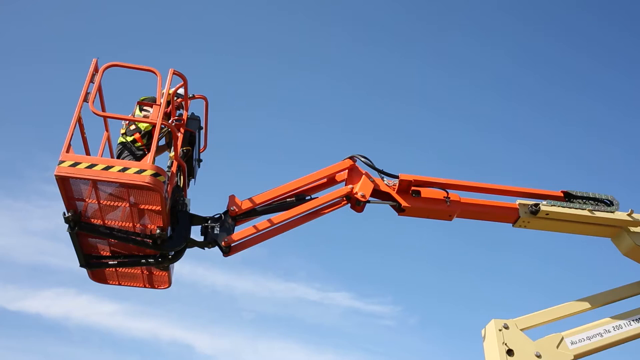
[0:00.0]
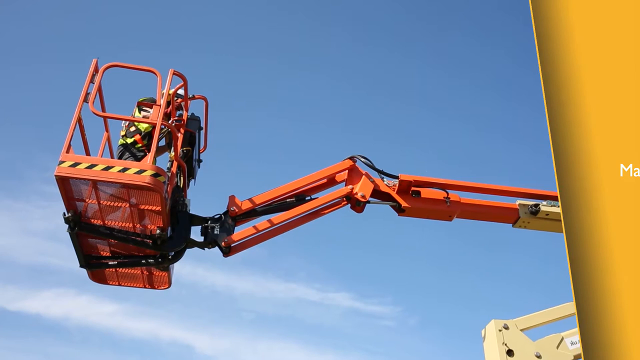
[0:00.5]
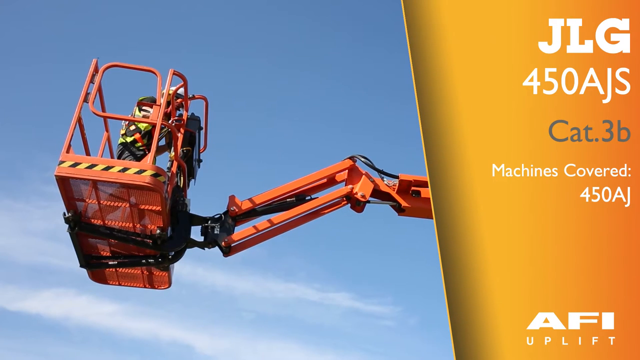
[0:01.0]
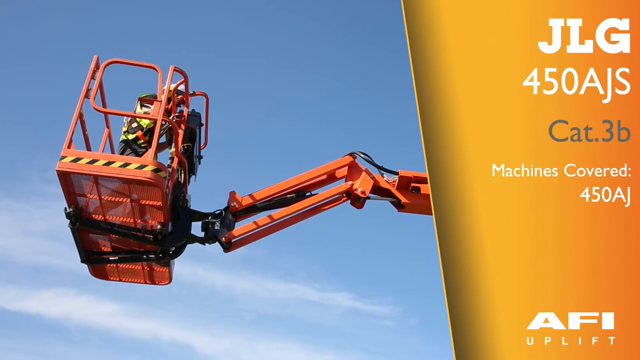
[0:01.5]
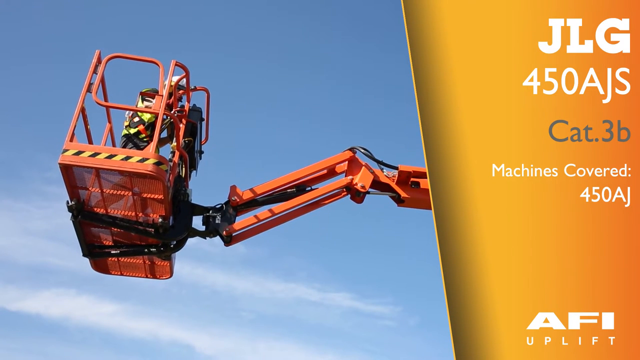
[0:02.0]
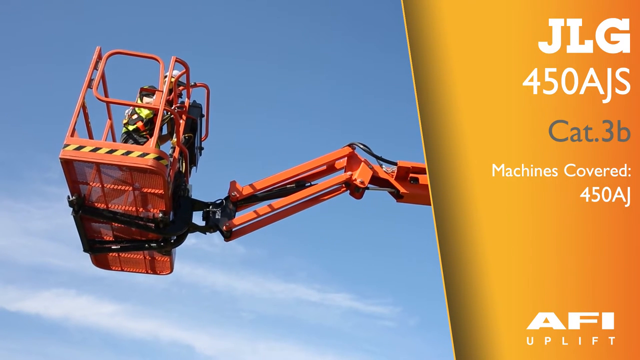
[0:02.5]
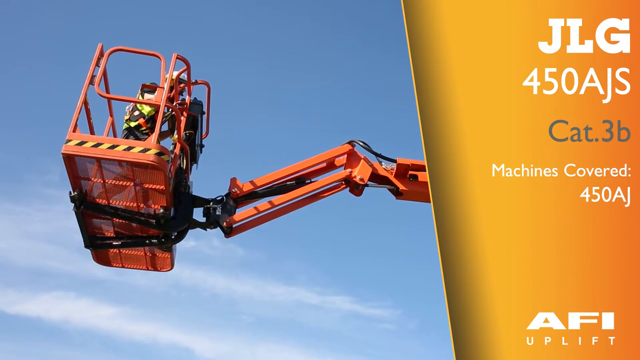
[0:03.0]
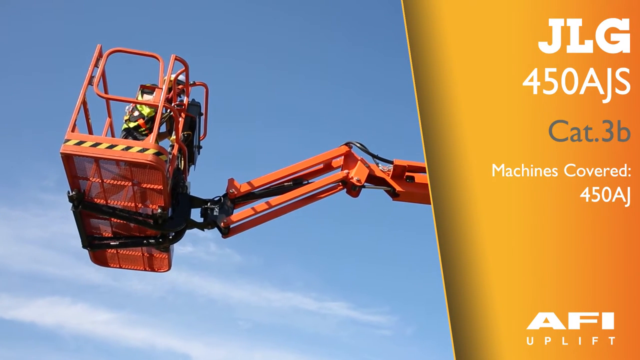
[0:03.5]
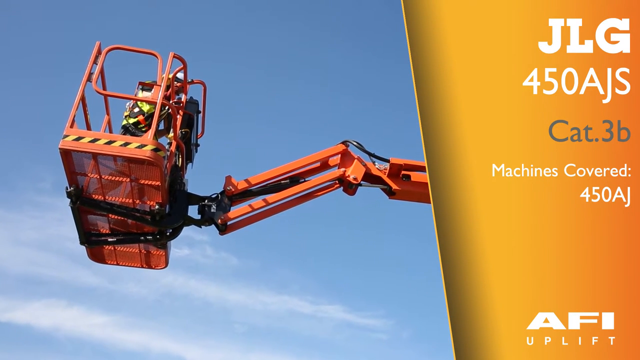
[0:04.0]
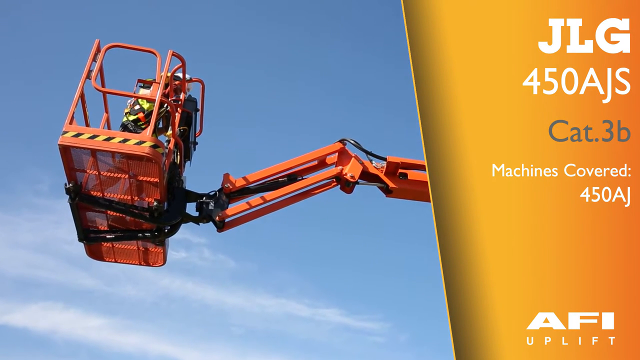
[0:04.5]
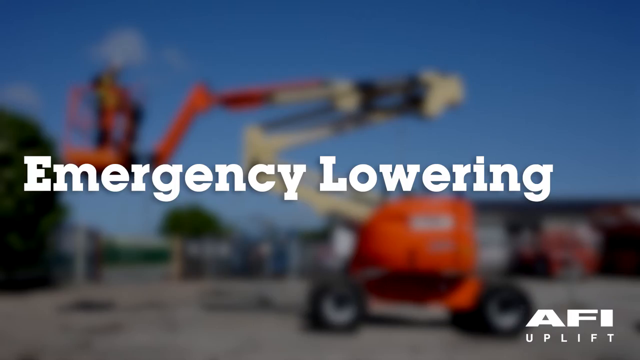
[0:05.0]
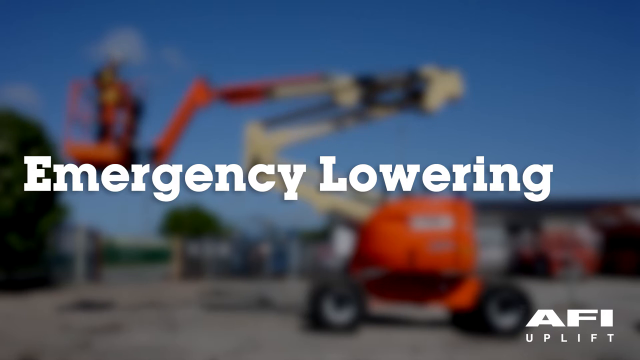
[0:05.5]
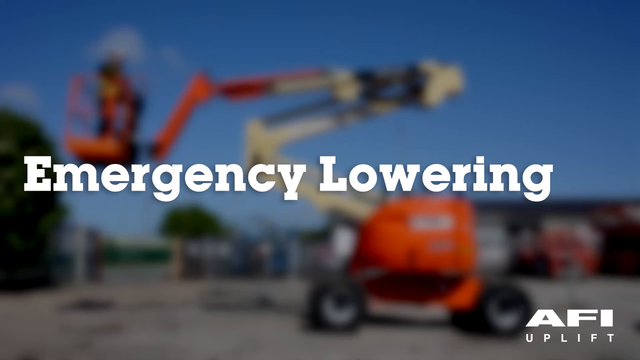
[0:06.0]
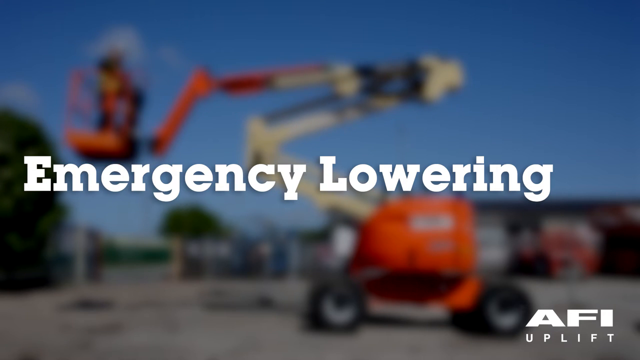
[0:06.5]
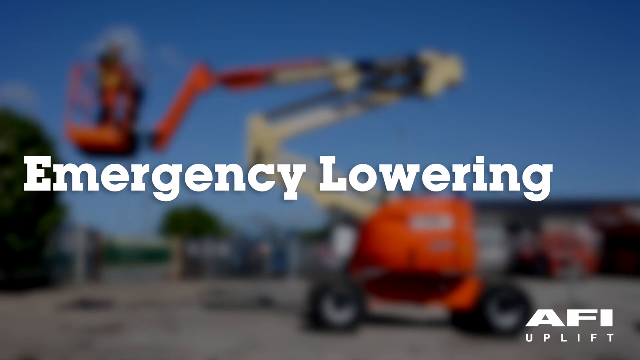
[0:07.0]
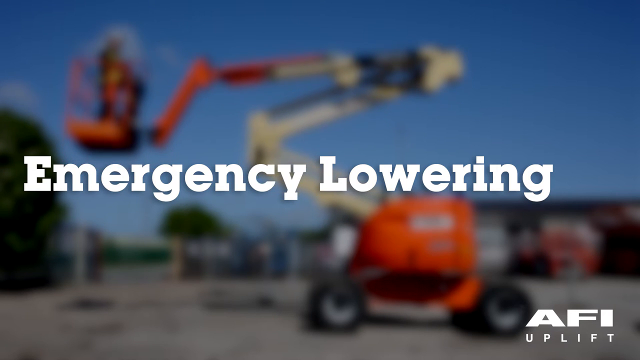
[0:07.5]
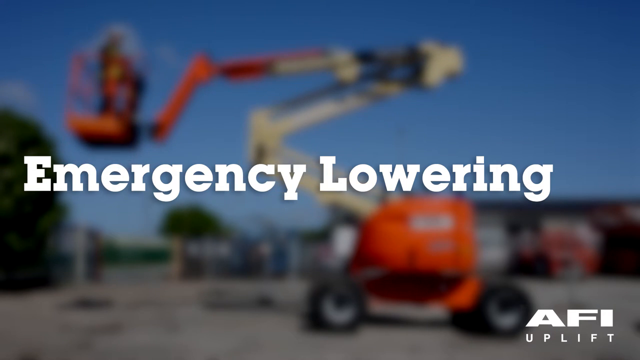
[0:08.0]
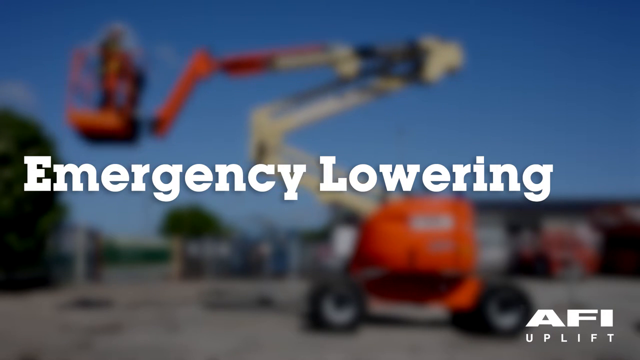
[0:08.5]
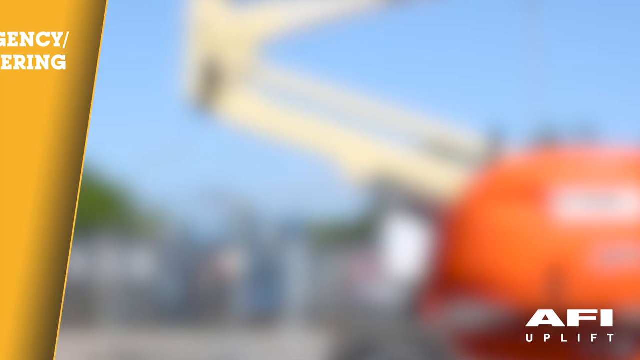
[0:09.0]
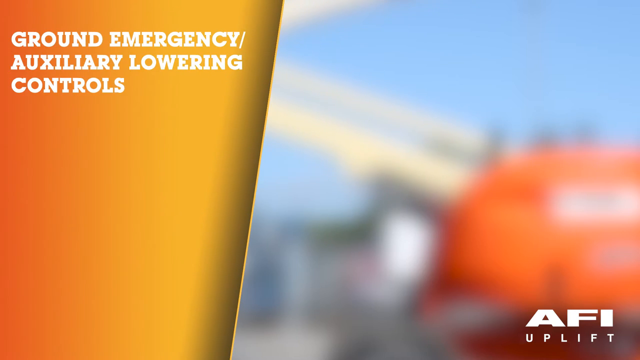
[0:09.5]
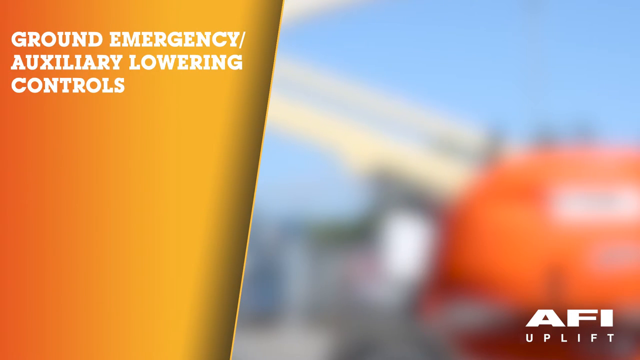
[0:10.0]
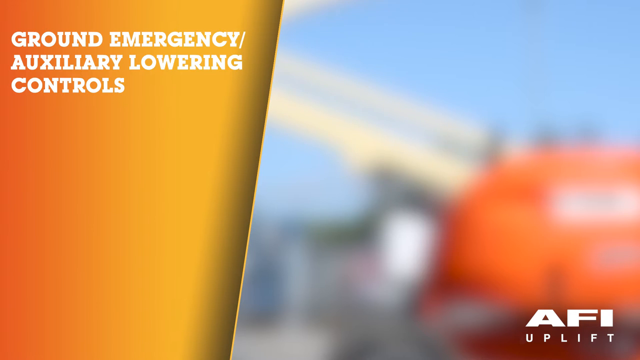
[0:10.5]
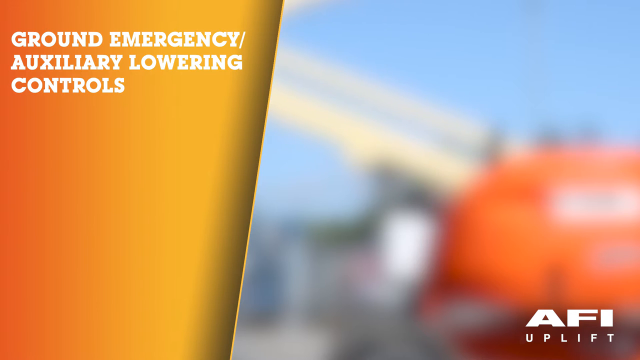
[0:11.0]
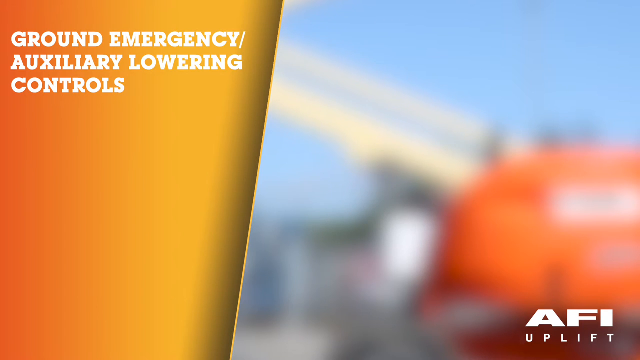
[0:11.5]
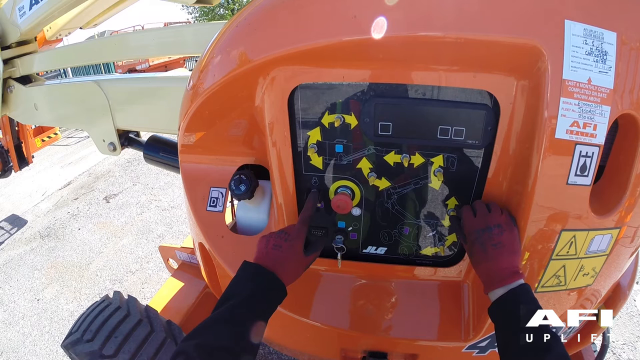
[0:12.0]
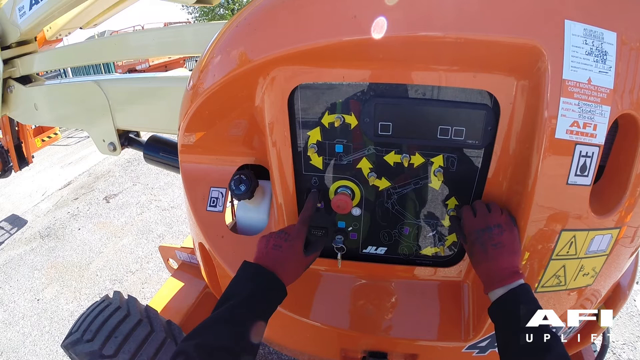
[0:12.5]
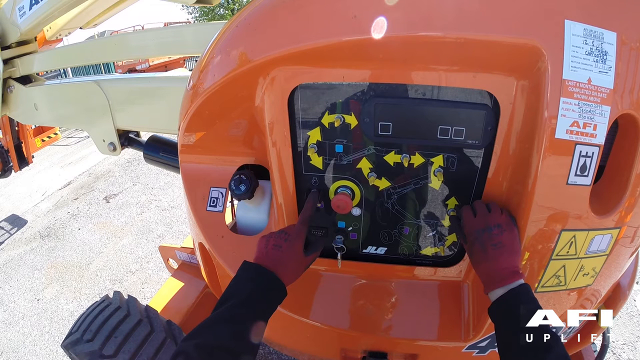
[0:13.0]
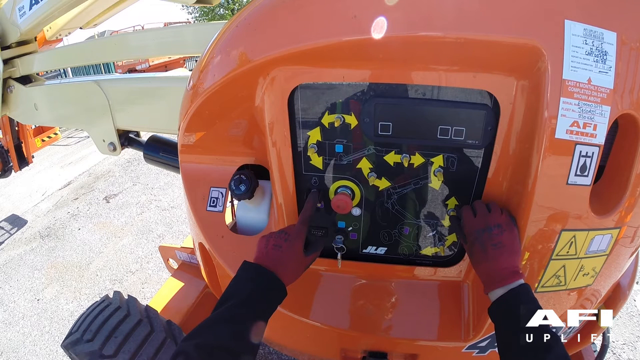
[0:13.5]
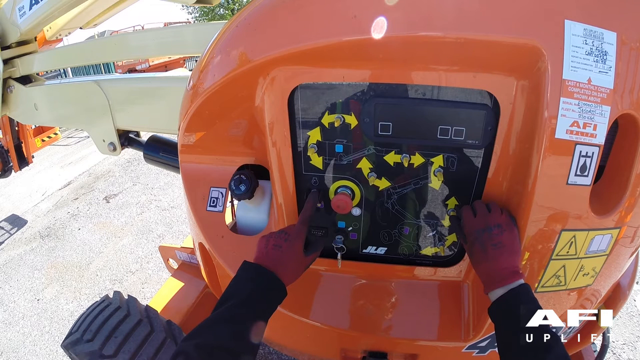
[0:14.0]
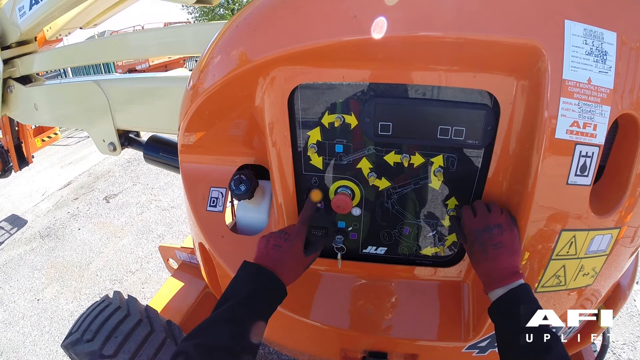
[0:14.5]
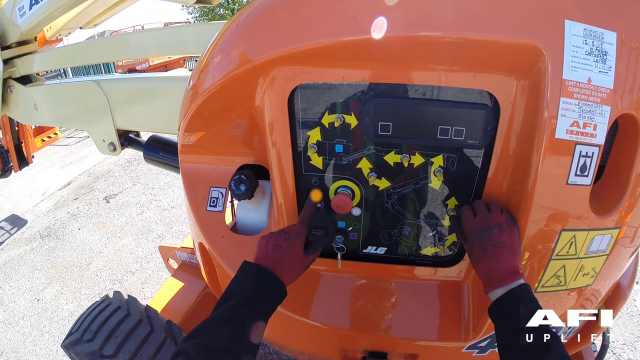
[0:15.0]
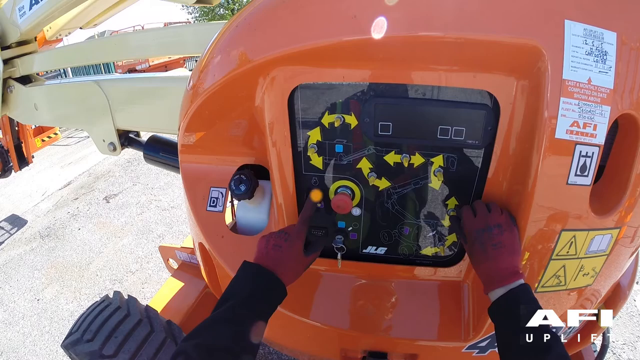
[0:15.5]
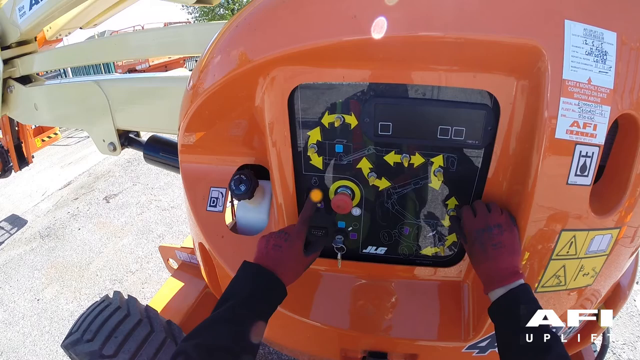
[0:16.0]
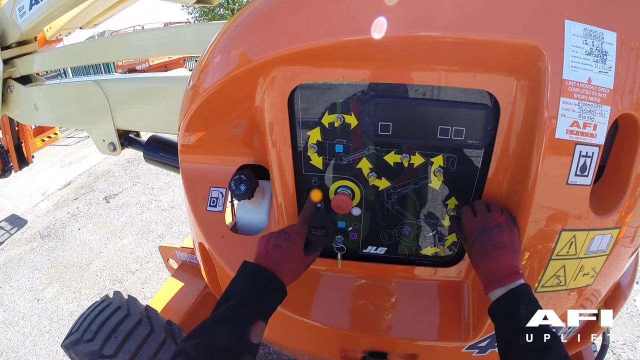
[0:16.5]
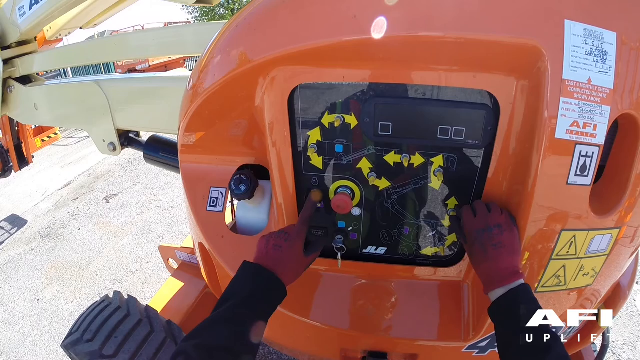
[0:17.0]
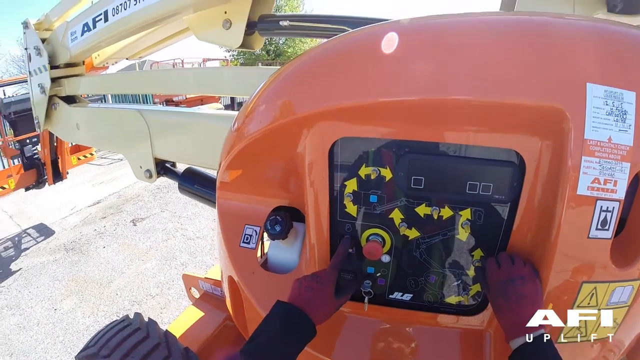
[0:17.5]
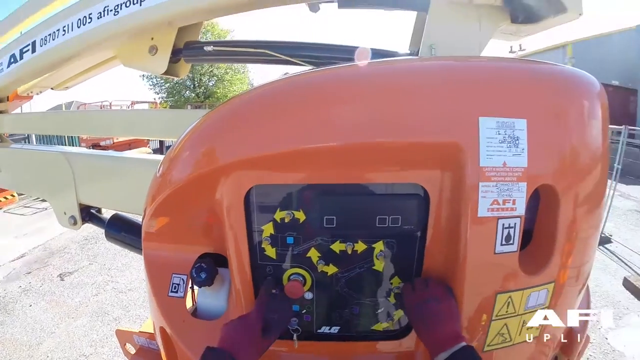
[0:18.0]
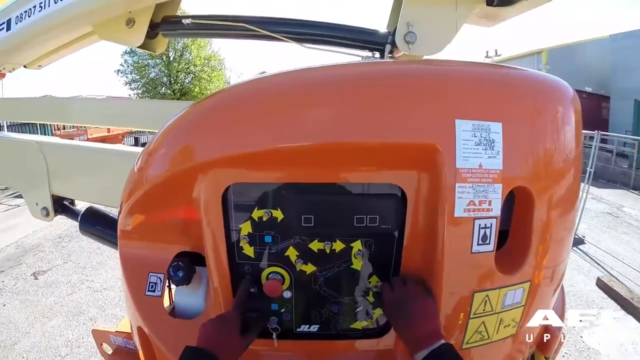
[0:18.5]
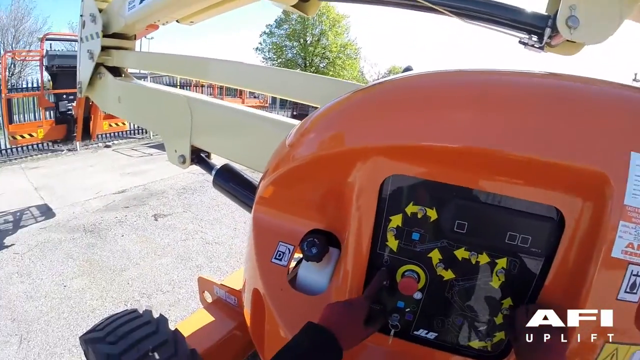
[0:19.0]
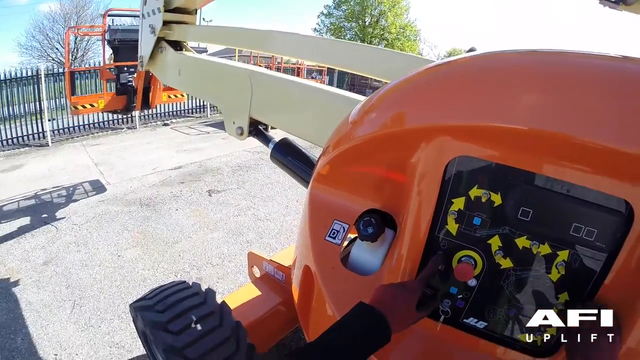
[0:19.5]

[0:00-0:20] What looks like a construction worker is on top of a cherry picker. Text on the machine reads "emergency lowering ground" and mentions an emergency auxiliary function. The video appears to be a commercial for an industrial cherry picker. The device is painted orange, with warning or caution tape around it, and it looks very sturdy and industrial.